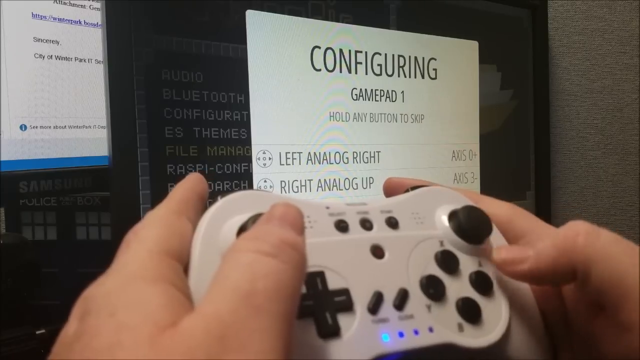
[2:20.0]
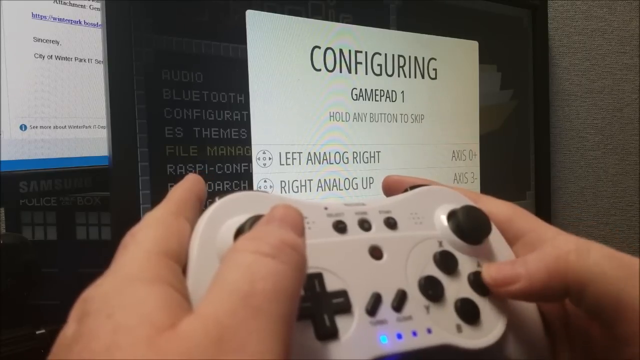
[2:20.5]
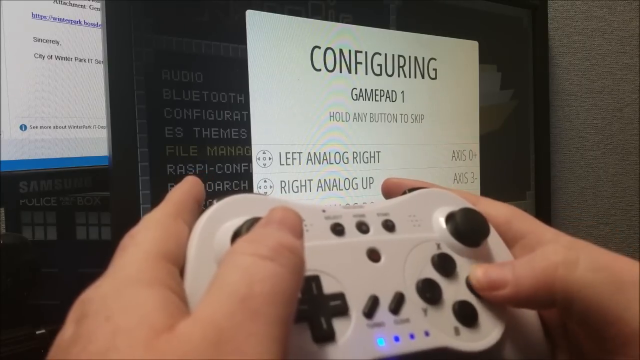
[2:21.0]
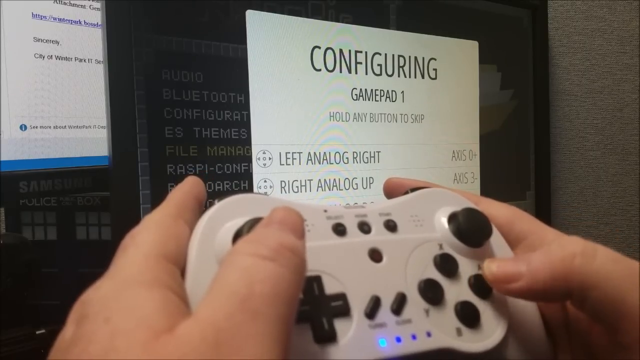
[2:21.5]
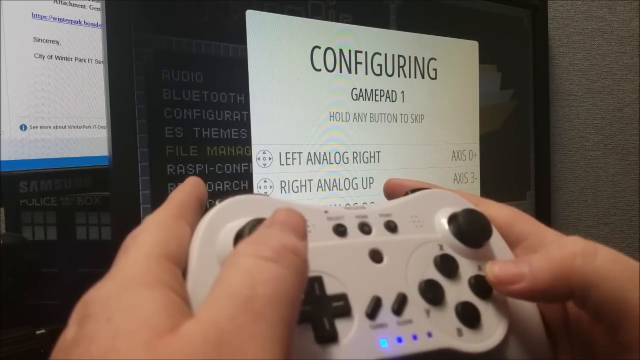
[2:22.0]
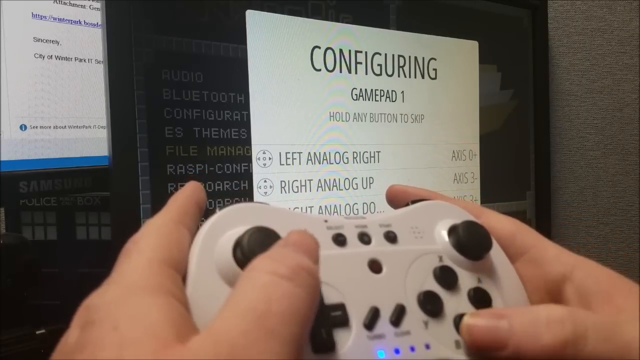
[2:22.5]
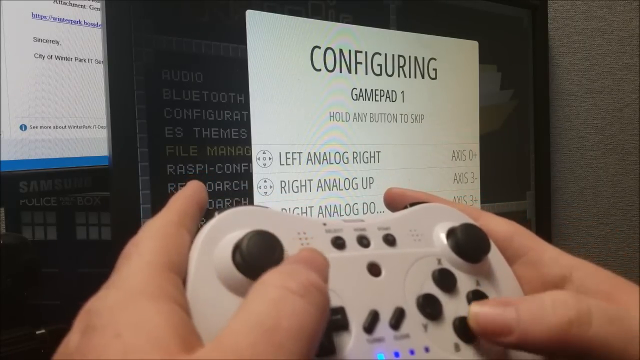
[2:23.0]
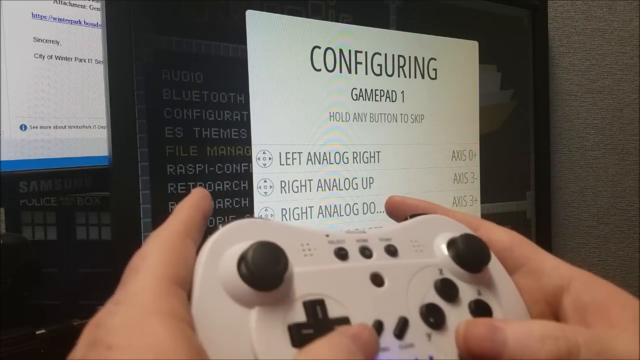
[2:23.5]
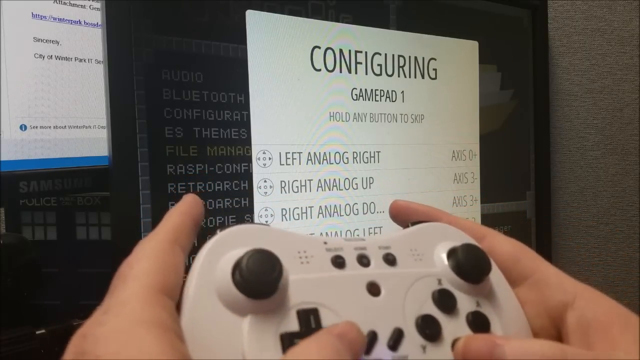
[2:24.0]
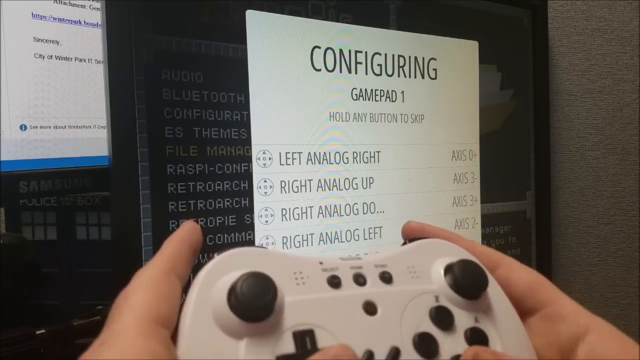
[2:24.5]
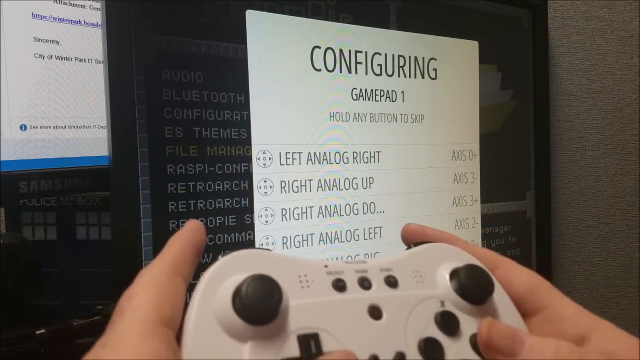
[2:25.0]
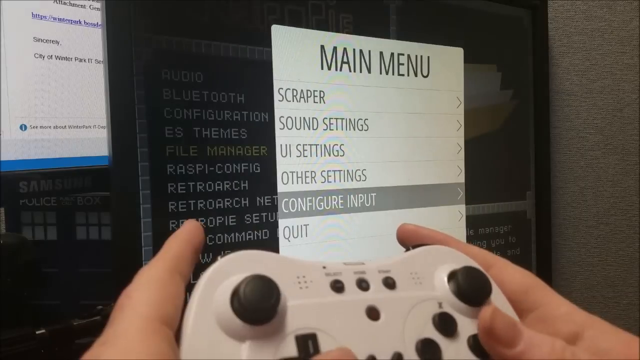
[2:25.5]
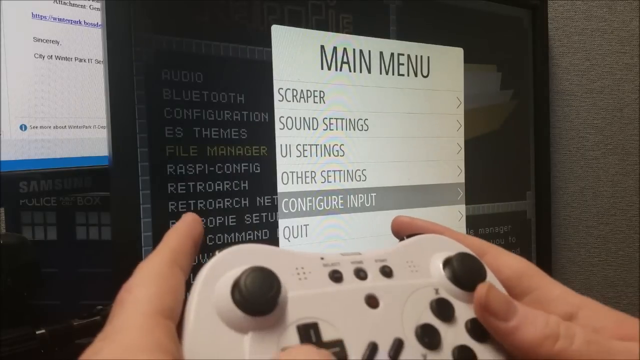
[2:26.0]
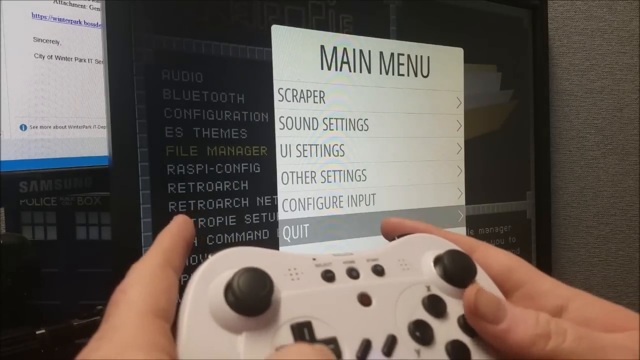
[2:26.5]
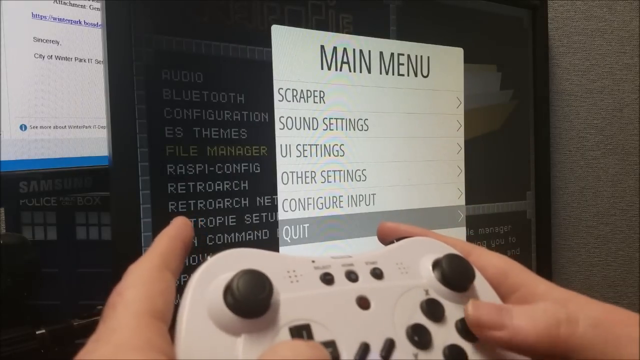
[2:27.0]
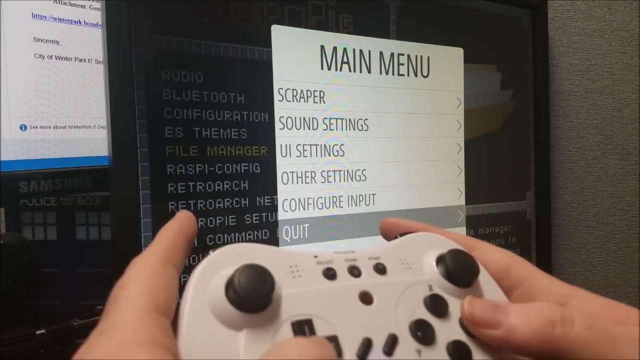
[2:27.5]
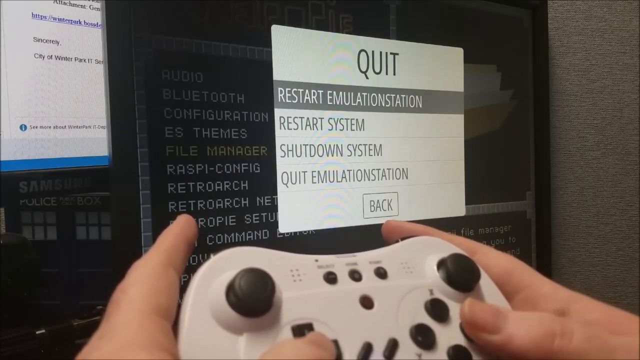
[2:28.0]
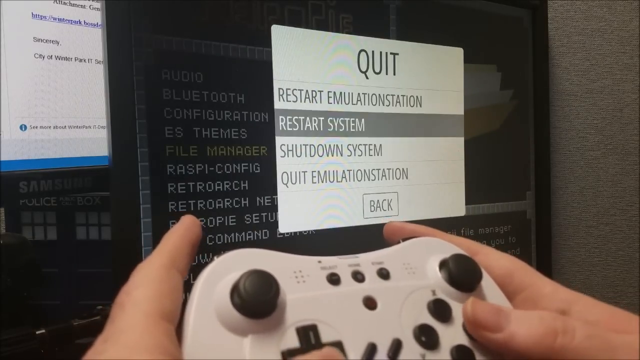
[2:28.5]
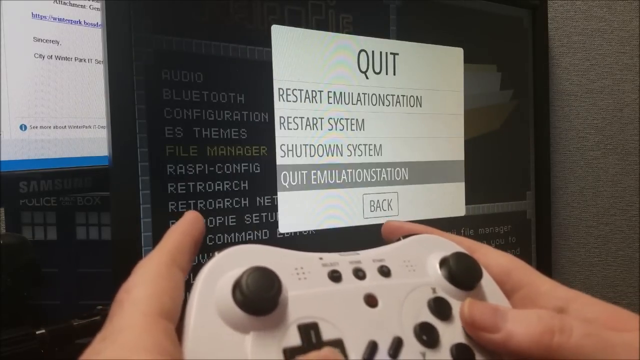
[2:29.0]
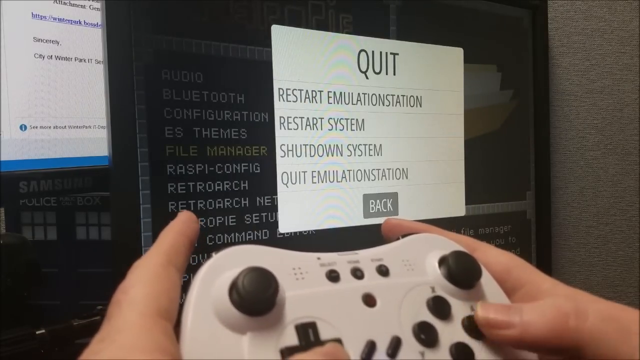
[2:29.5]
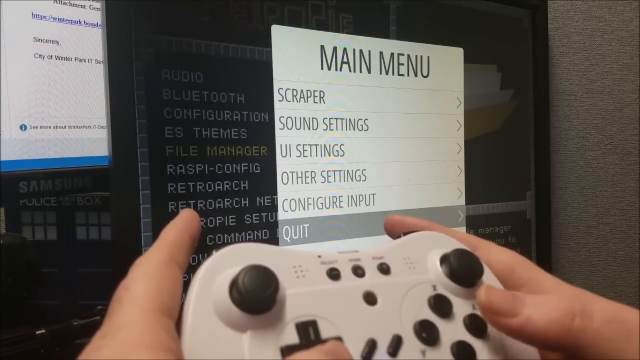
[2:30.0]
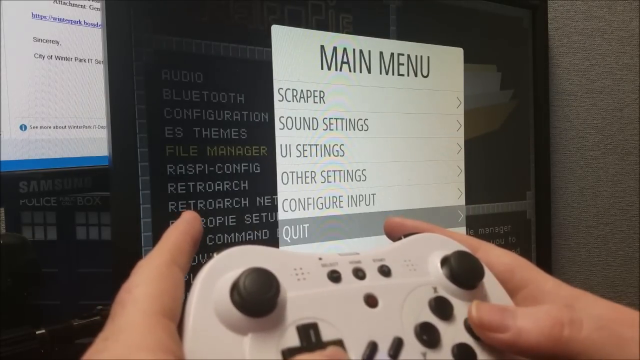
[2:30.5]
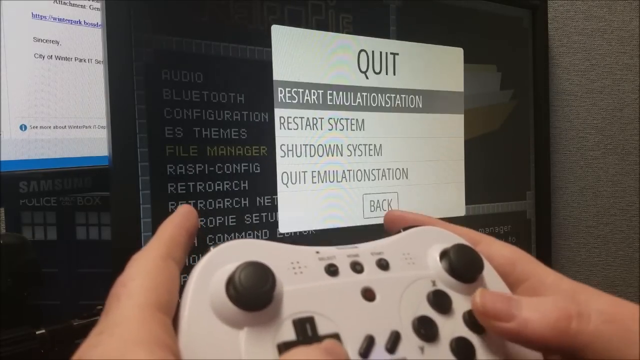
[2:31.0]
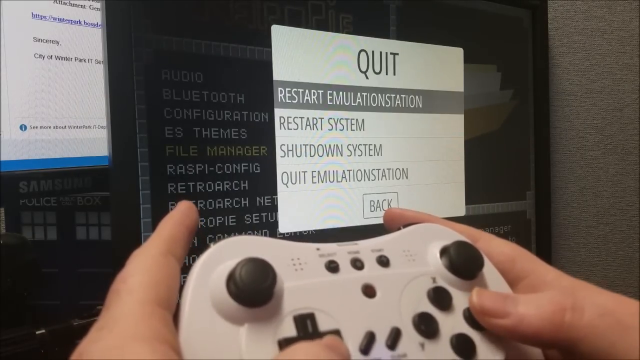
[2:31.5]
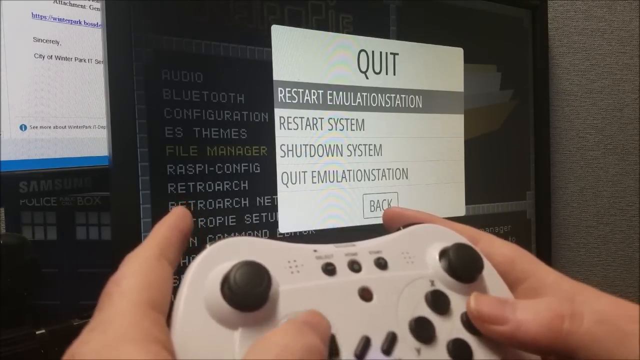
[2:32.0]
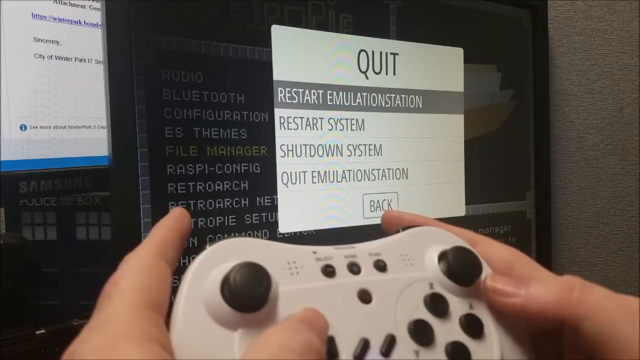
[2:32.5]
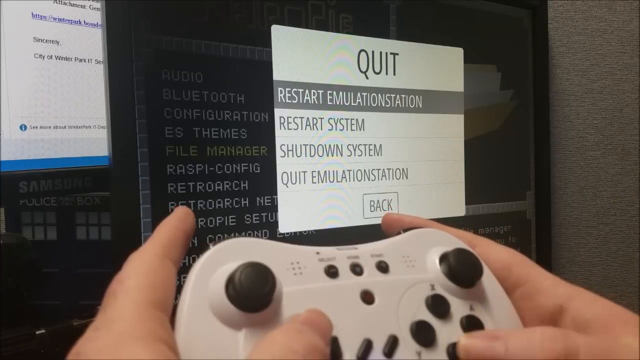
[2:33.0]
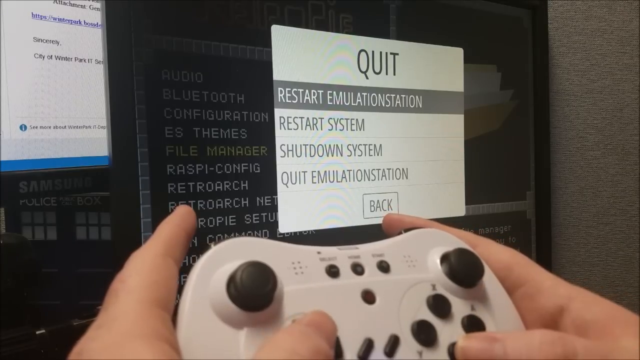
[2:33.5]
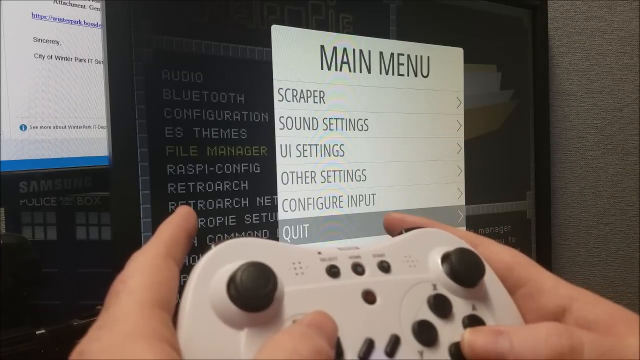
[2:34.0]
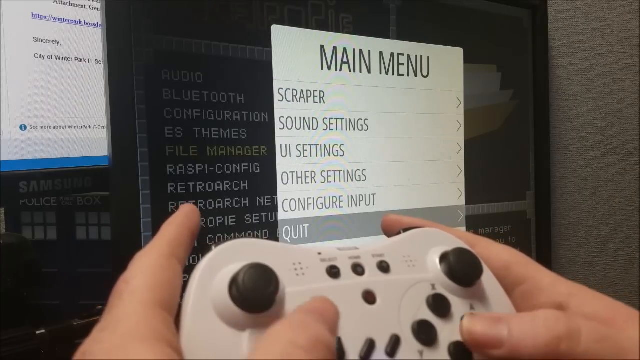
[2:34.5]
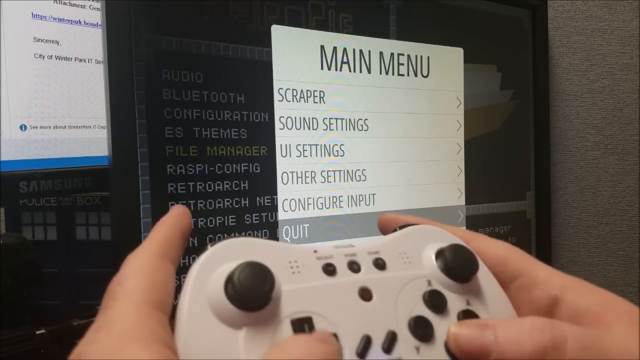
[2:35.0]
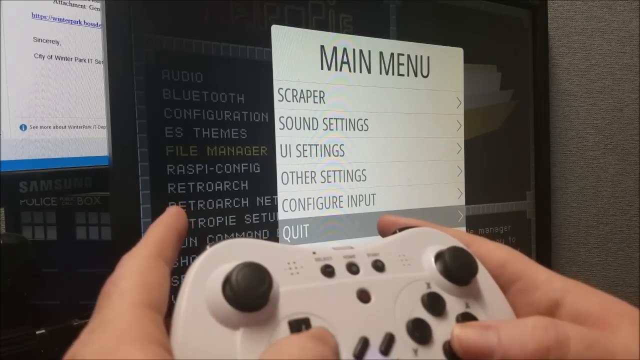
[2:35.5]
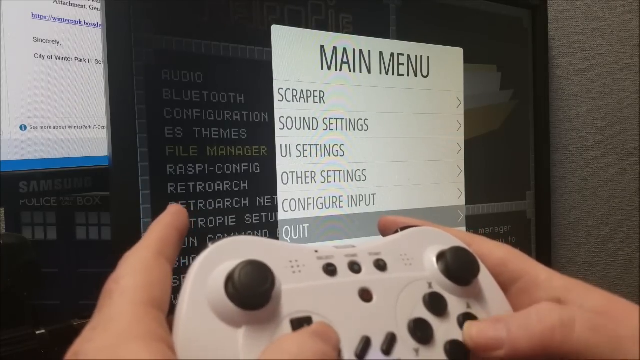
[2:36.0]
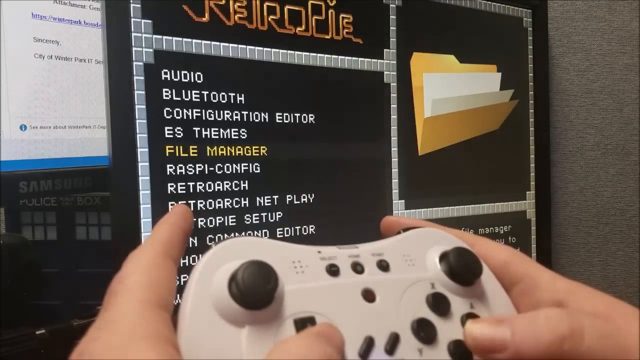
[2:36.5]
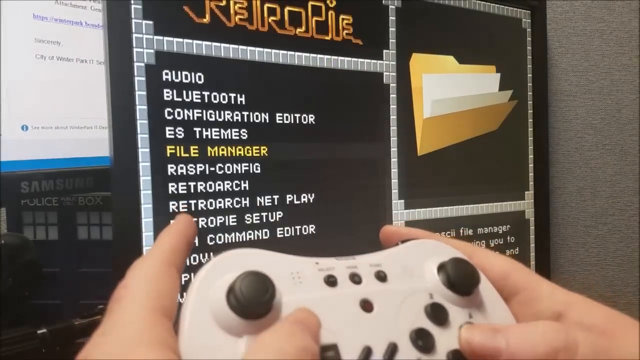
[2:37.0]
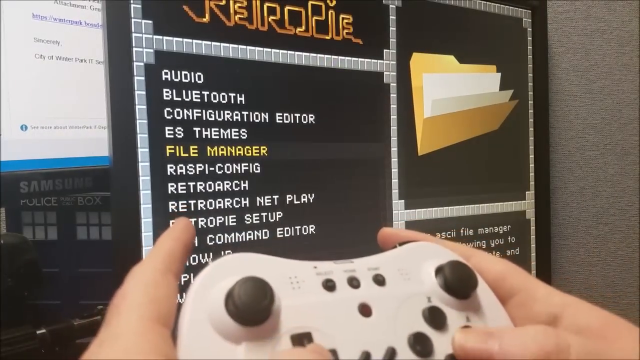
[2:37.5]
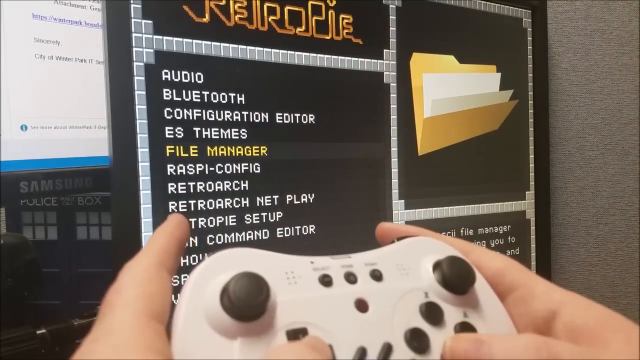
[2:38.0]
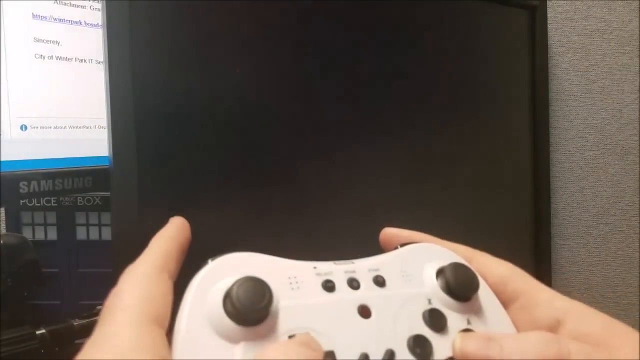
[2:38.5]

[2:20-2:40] The scene appears to be a corner of a cubicle, with the cubicle wall on the right. There are two computer monitors; a portion of the one in the back, a Samsung, is visible, with a Darth Vader head below it. A bit in the background are the words "police box" and two doors with six window panes each. The main image is a computer monitor with a File Manager page open for RetroPie, showing a file folder to the right and multiple entries in the left column. In the foreground, a person's hands hold a white game controller with black buttons. A pop-up on the screen reads "Configuring Gamepad 1. Hold any button to skip." Two entries are visible: the top one is "left analog right" and the bottom one is "right analog up". The person moves their thumbs, pressing buttons on the controller, and the main menu pops up. They continue to press buttons until "quit" appears, then the main menu, then the pop-up box is gone, and then they turn off the computer monitor.